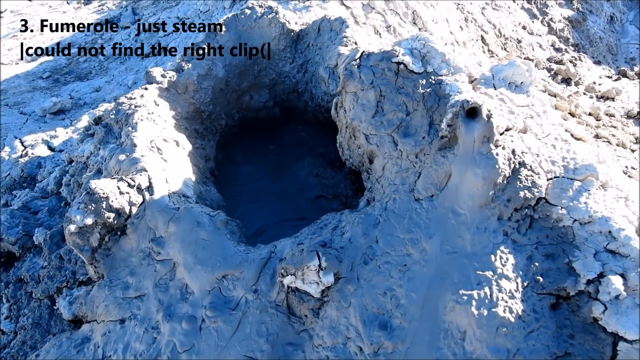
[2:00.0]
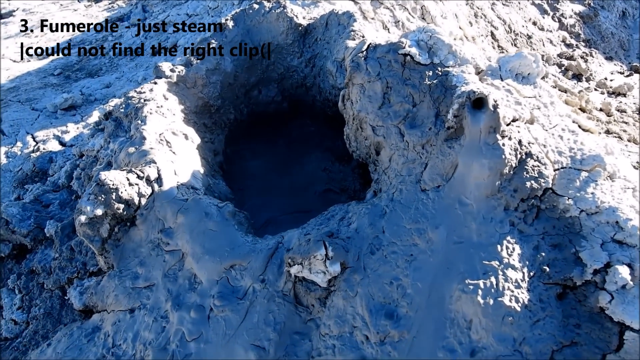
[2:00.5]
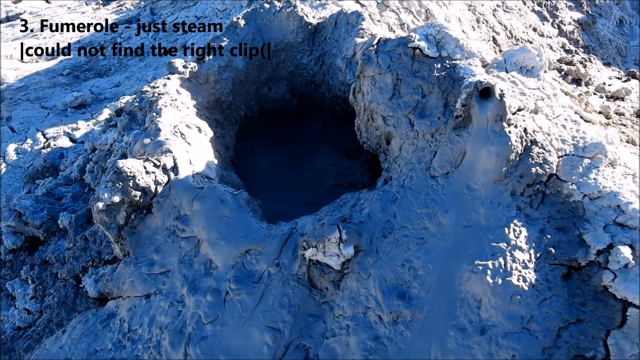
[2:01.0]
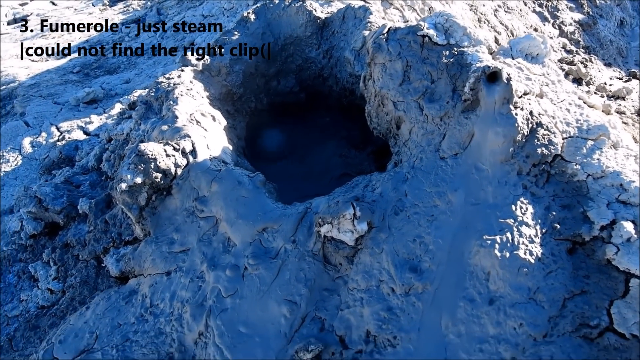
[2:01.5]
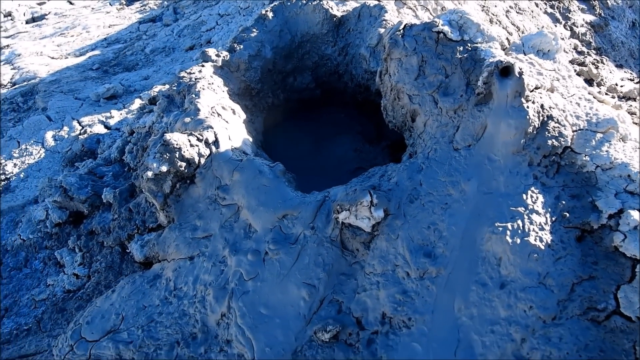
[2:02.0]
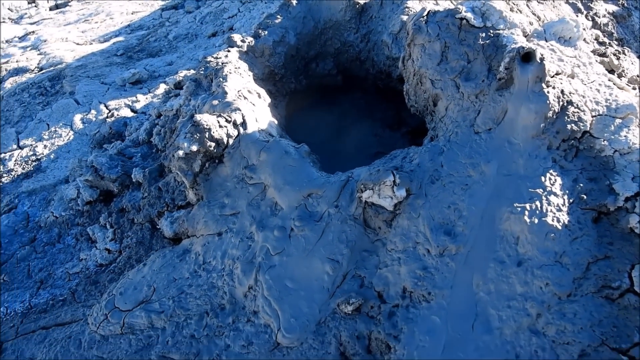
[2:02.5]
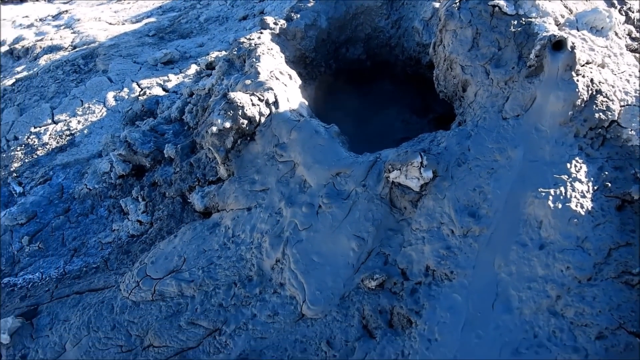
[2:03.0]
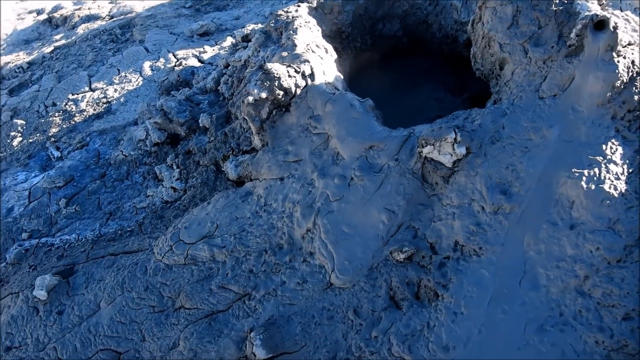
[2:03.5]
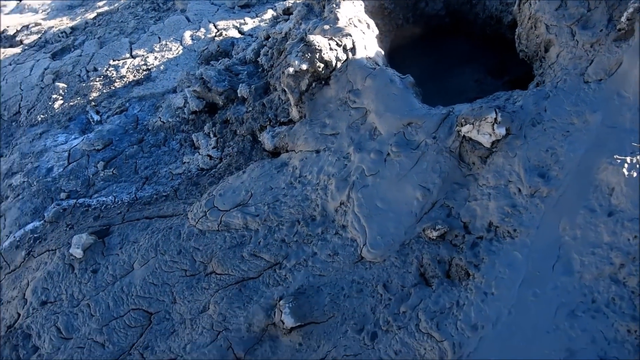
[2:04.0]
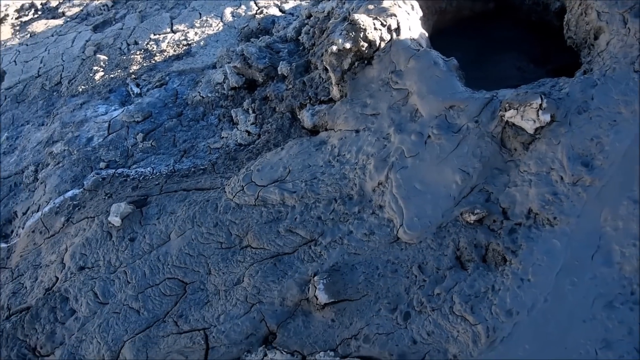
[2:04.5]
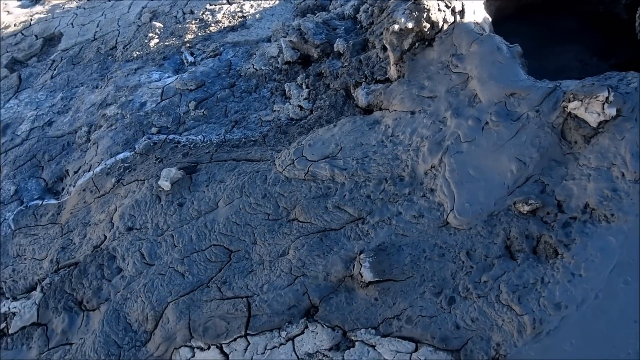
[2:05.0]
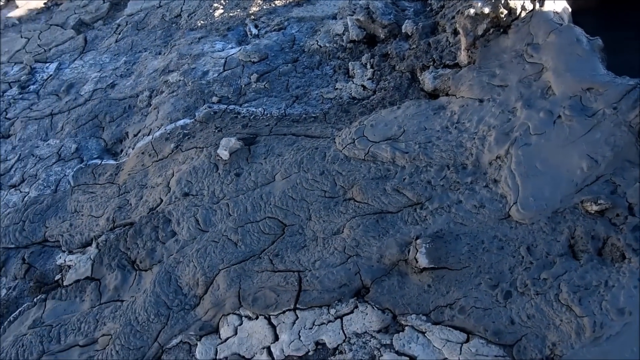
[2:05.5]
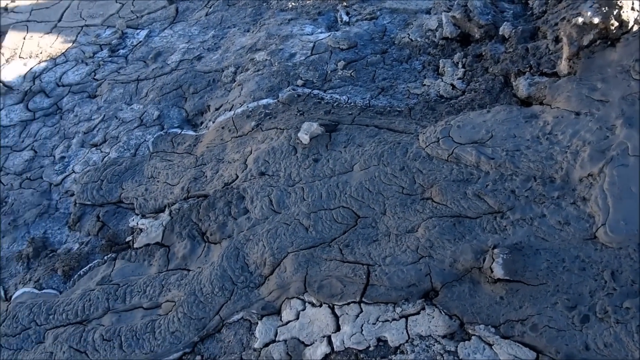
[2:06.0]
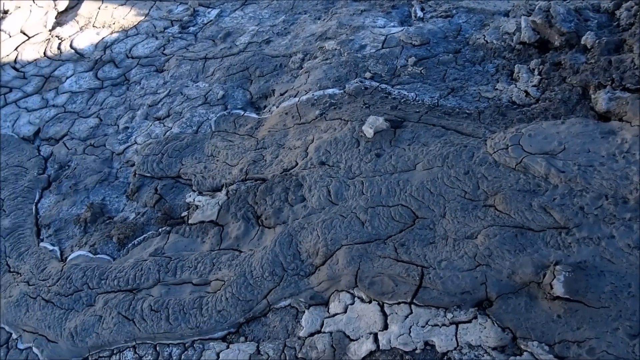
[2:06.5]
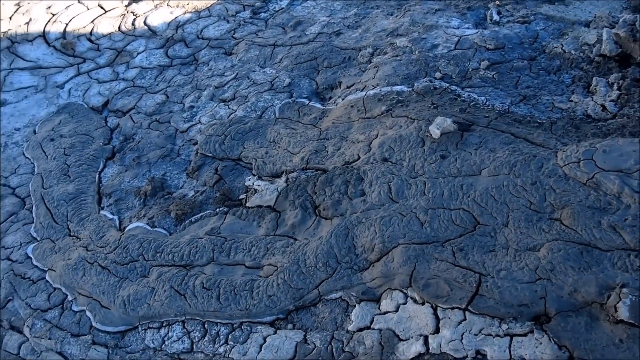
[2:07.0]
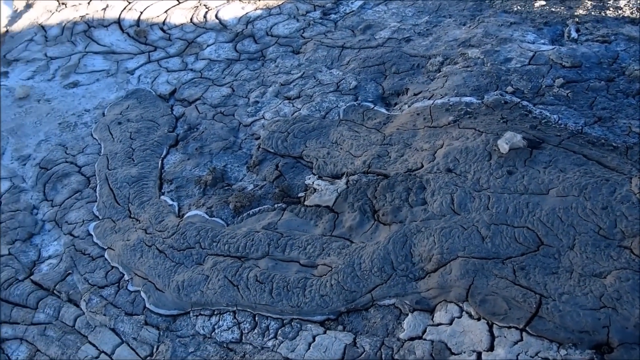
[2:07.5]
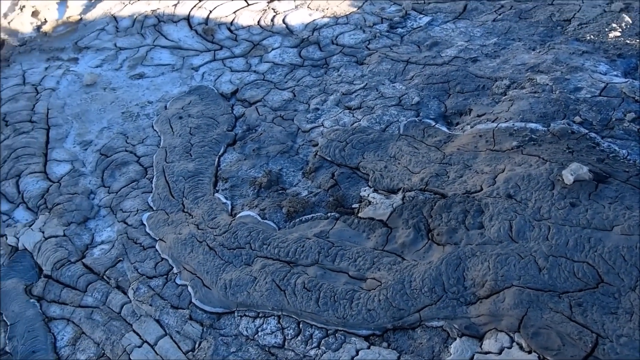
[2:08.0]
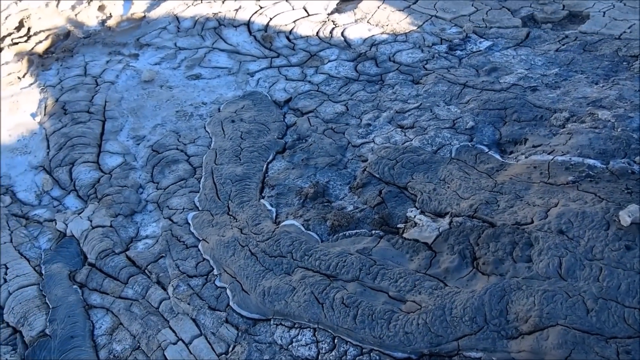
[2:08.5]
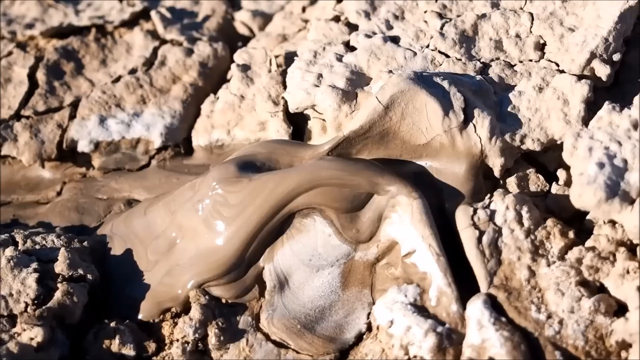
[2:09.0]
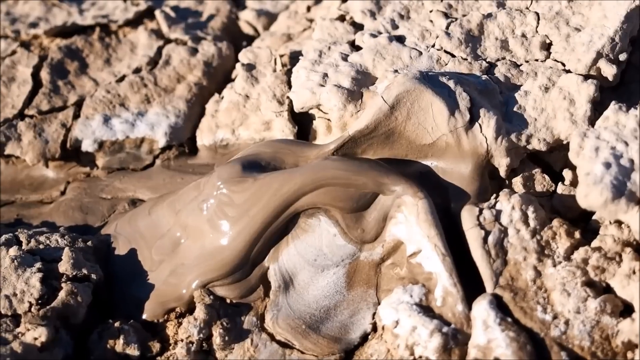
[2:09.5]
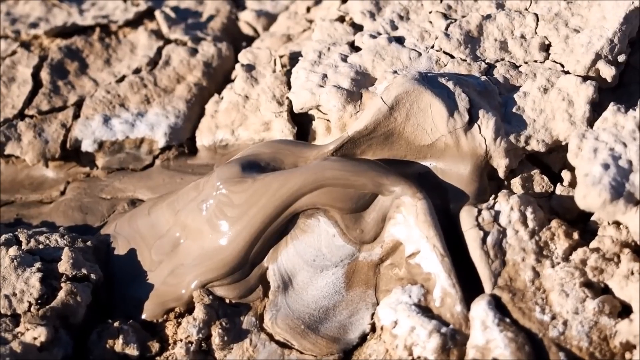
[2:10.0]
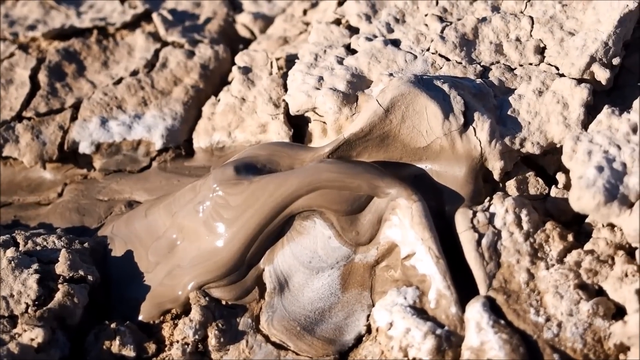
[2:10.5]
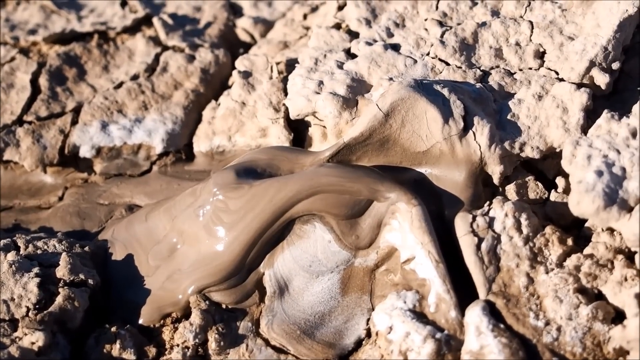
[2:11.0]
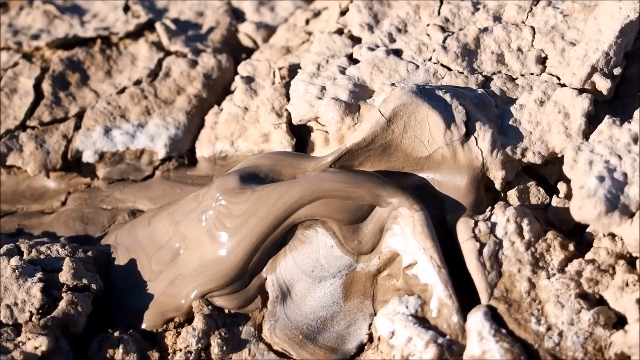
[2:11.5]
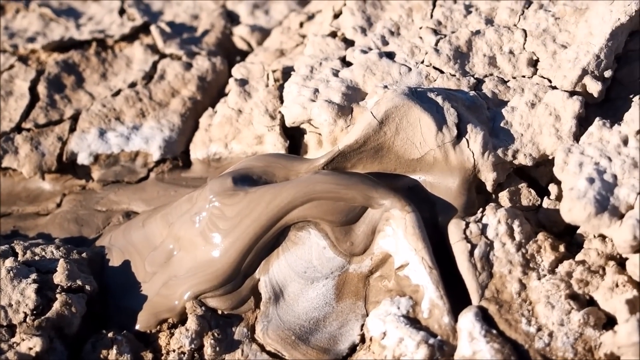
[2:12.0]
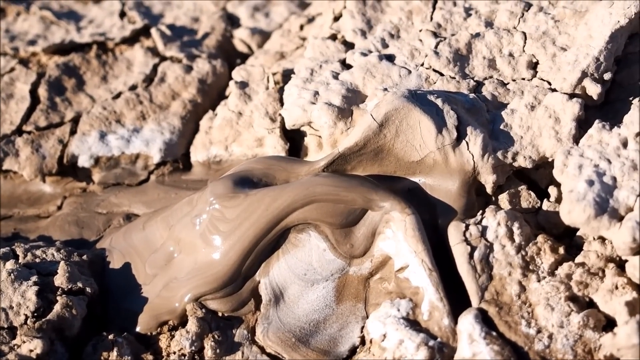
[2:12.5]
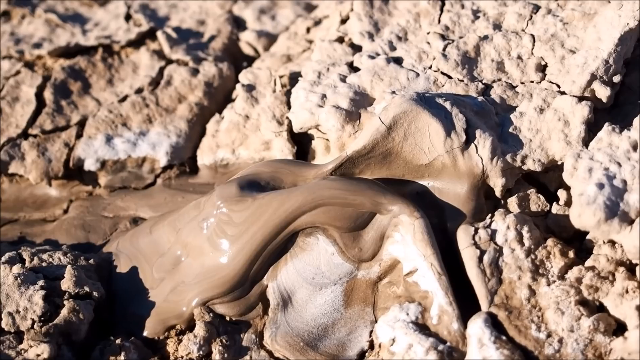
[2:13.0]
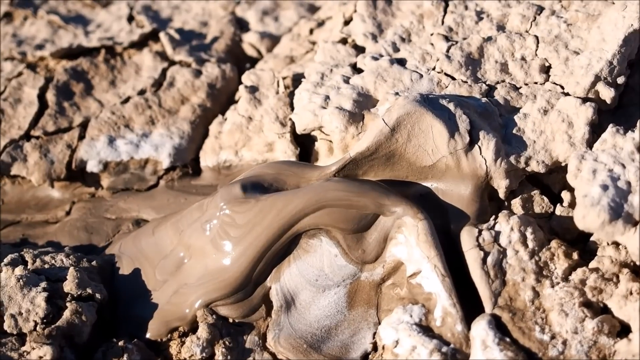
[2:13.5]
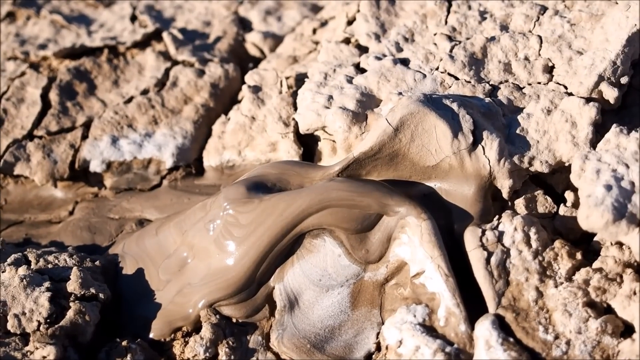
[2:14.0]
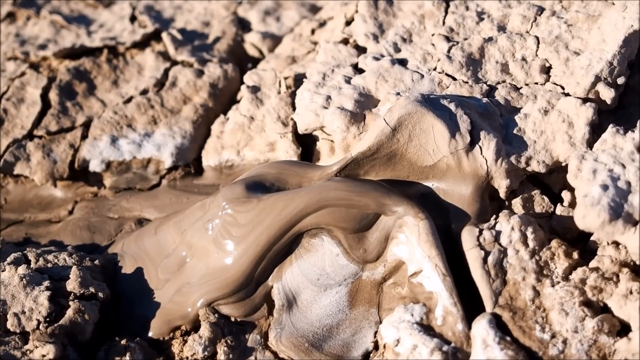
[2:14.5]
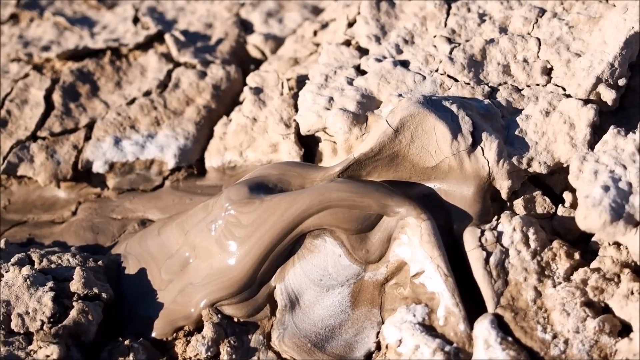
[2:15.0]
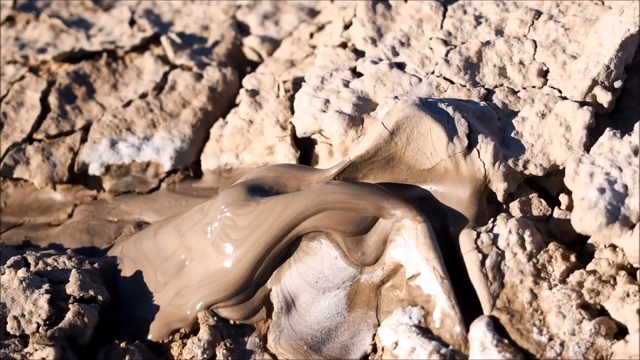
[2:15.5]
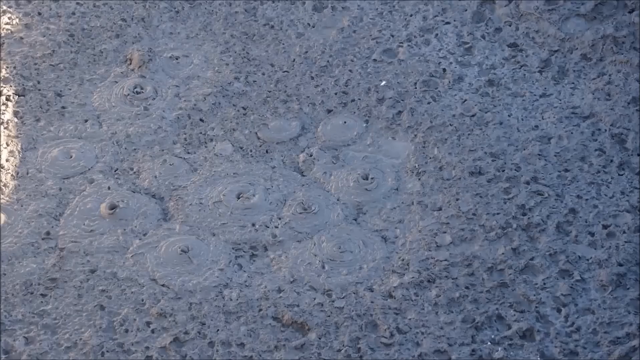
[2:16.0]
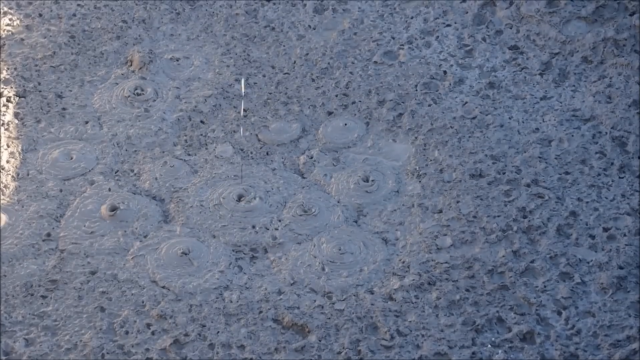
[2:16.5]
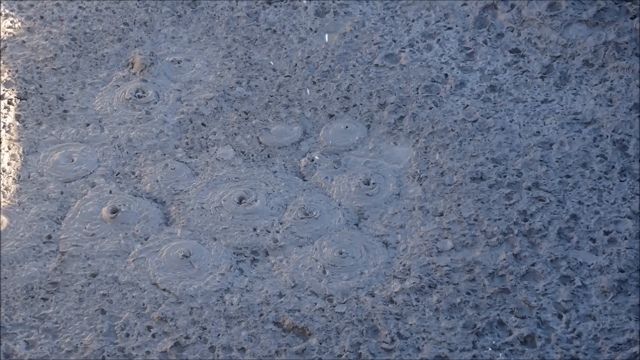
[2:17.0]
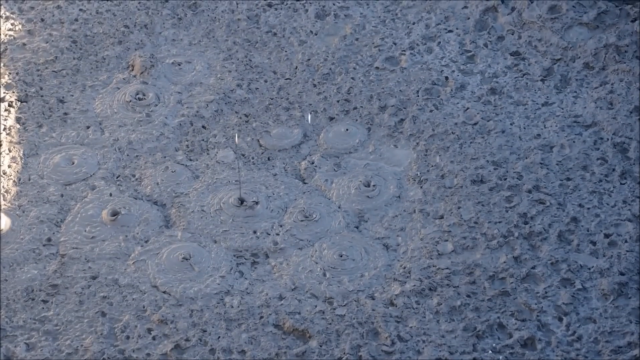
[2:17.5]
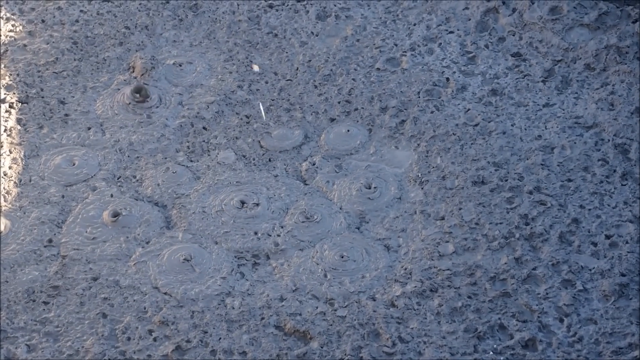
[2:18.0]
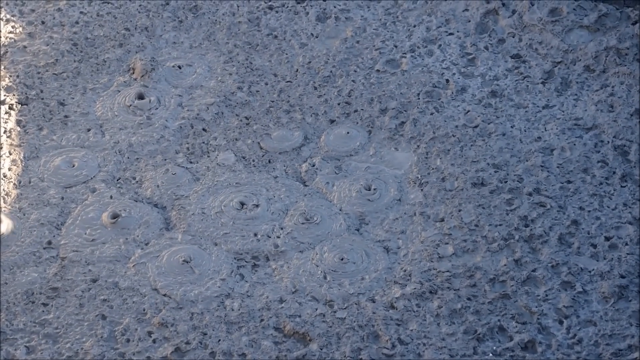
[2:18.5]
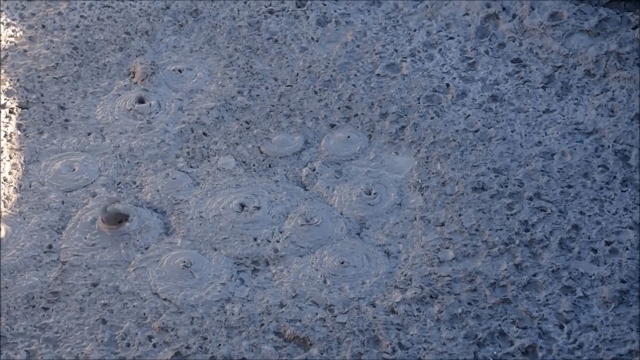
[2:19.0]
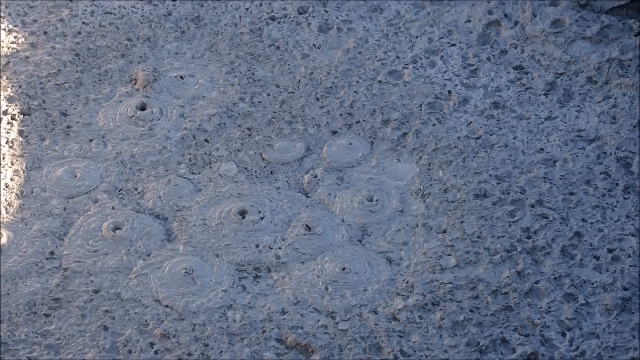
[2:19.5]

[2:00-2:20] The hole with the bubbling mud and clay continues, and the entire rocky formation is visible, mostly a grey, dirty, almost white colour. The ground is made completely of irregularly shaped rocks. The video cuts to a close-up of the mud and clay, which seems slimy and is a deep brown, still bubbling. Another shot shows different circles of mud and clay bubbling and seemingly almost spitting some of the mud into the air. Around them is what looks like drier mixed mud and clay, and everything is homogeneous in colour, mostly grey with a tint of brown.